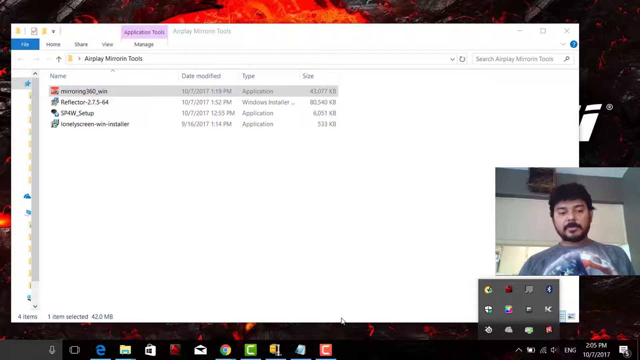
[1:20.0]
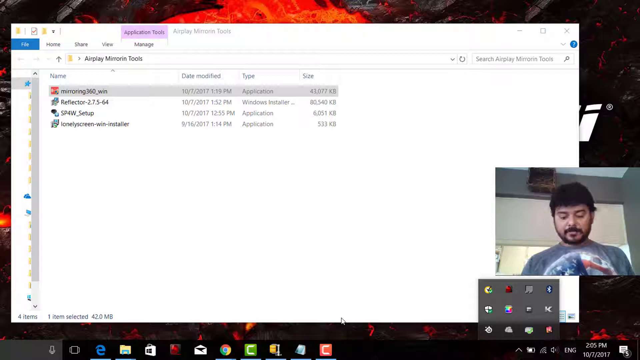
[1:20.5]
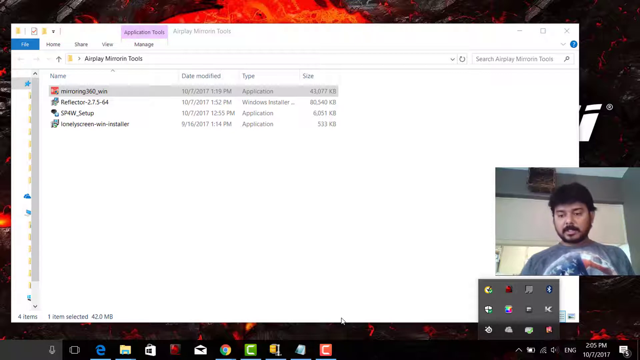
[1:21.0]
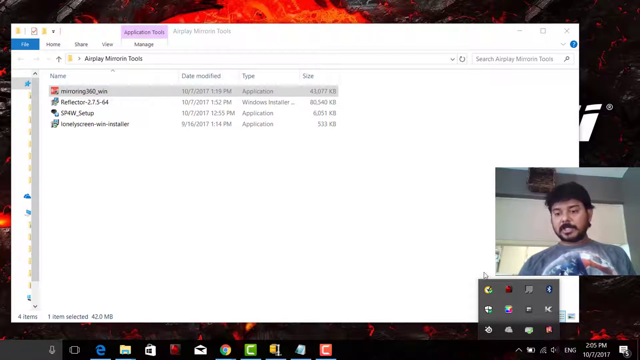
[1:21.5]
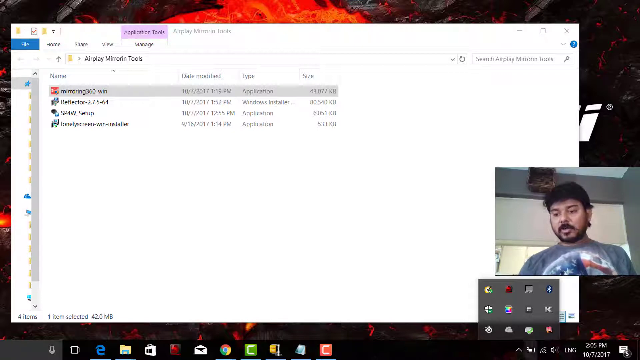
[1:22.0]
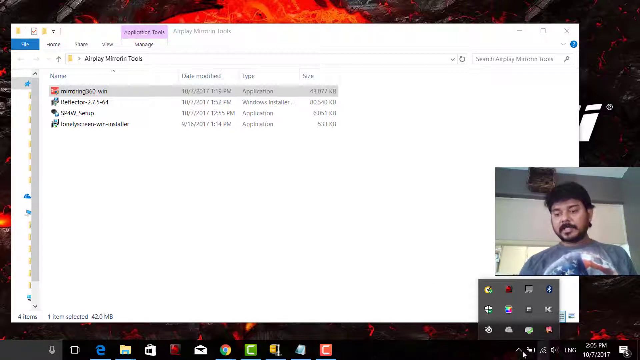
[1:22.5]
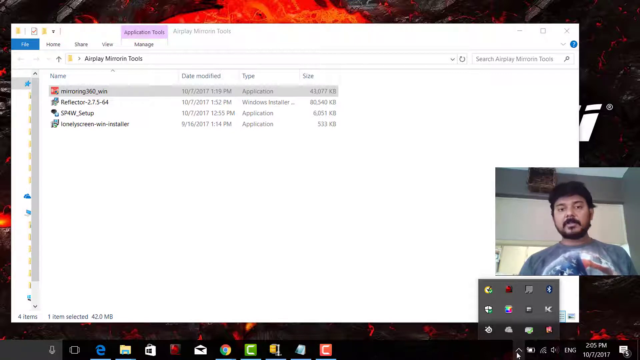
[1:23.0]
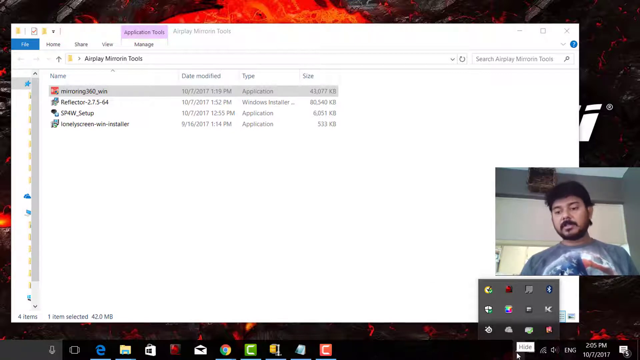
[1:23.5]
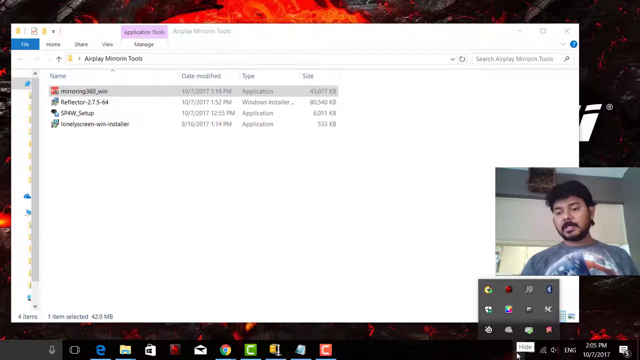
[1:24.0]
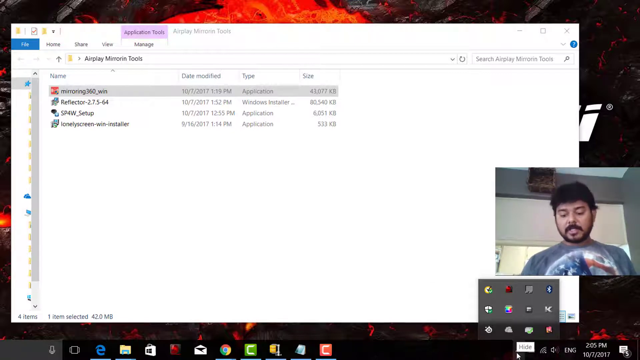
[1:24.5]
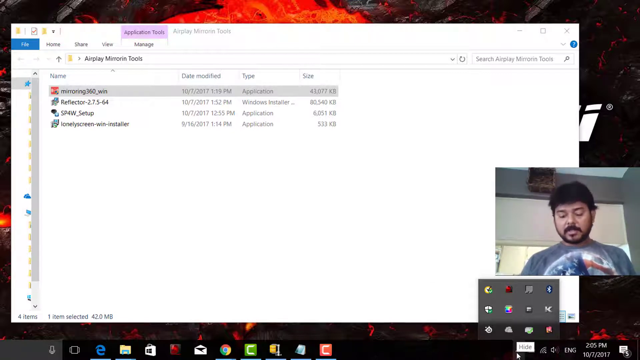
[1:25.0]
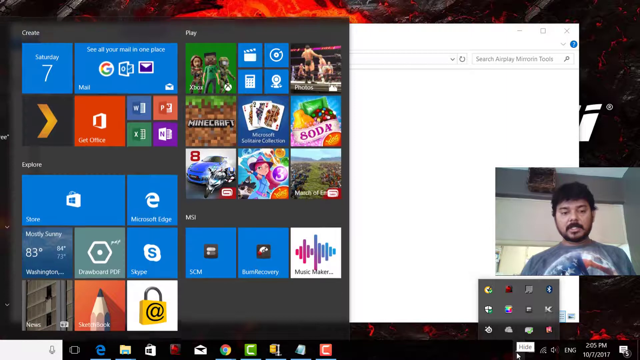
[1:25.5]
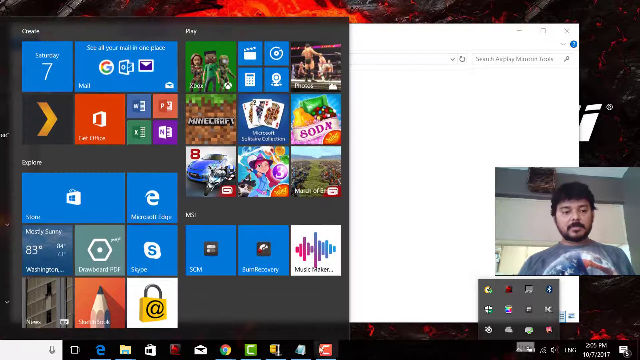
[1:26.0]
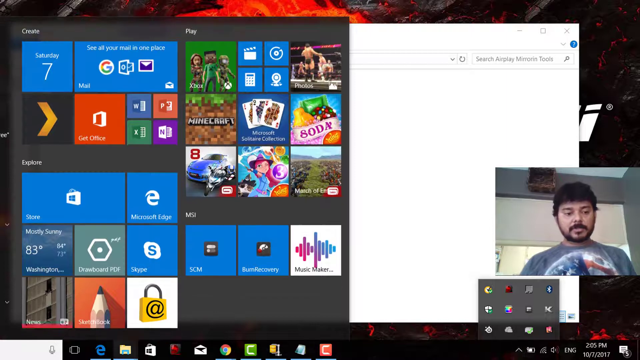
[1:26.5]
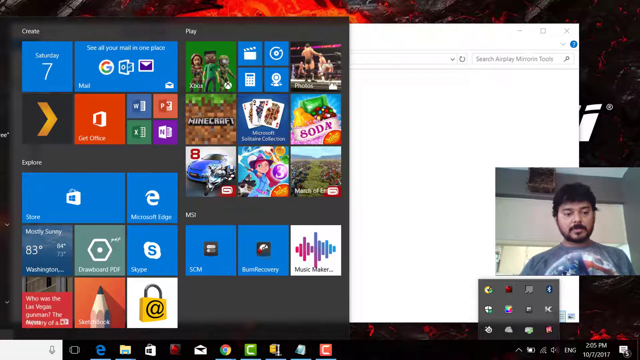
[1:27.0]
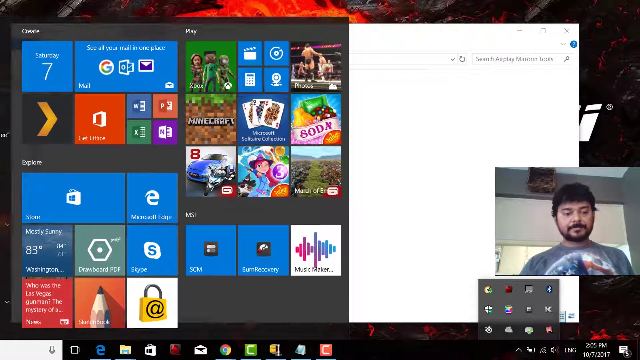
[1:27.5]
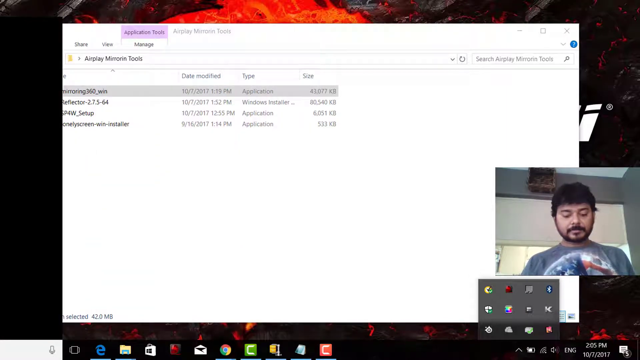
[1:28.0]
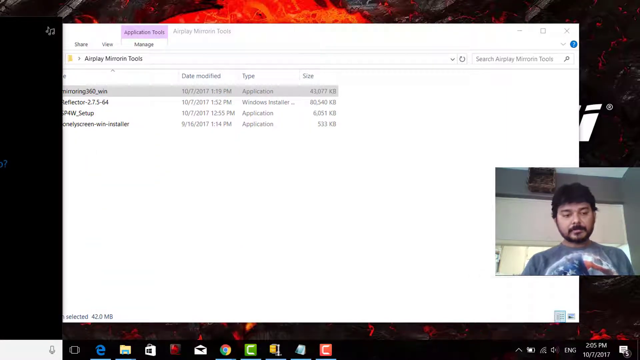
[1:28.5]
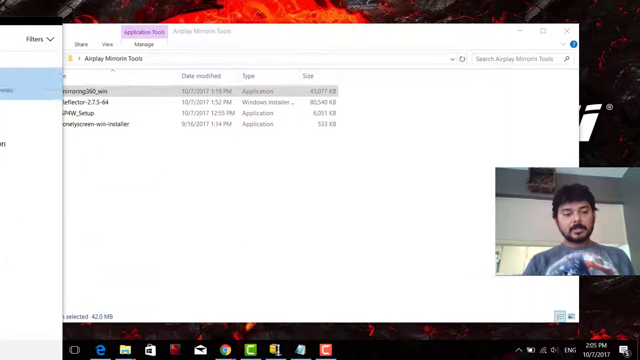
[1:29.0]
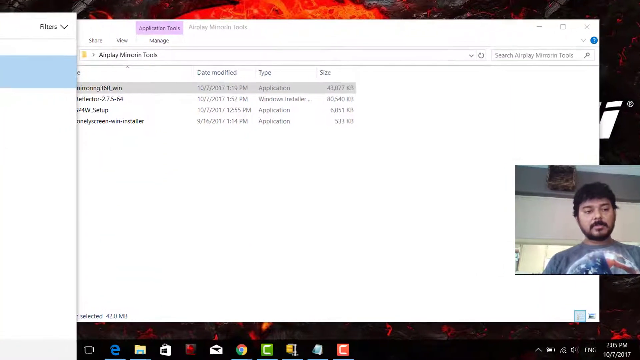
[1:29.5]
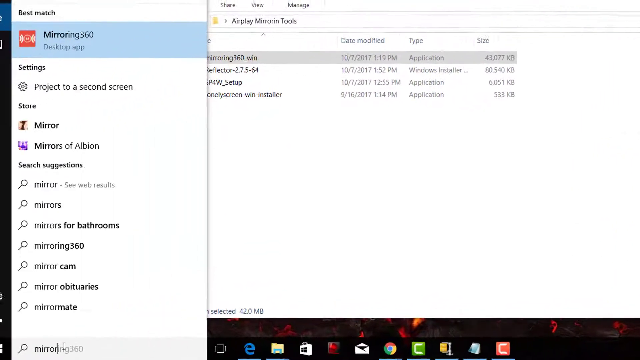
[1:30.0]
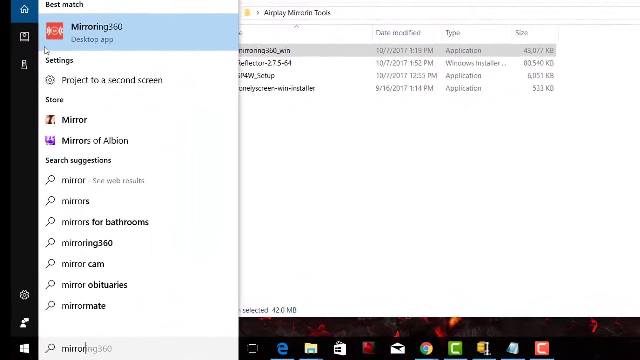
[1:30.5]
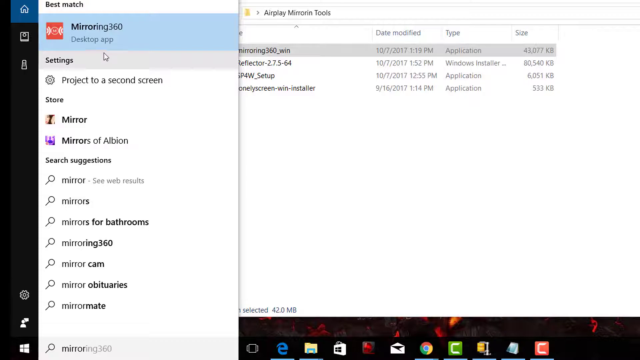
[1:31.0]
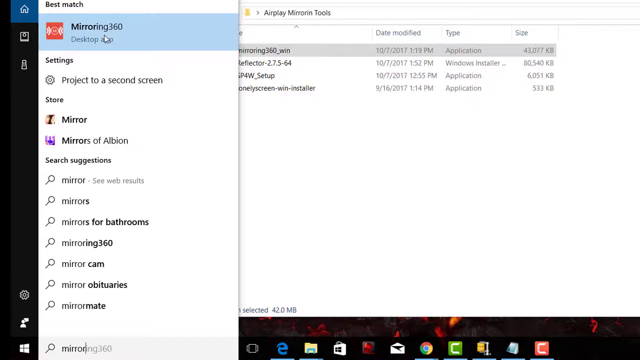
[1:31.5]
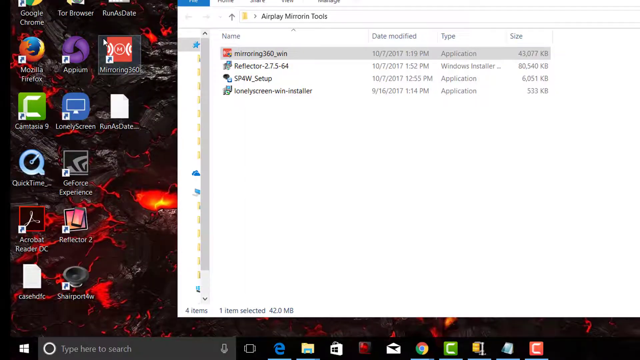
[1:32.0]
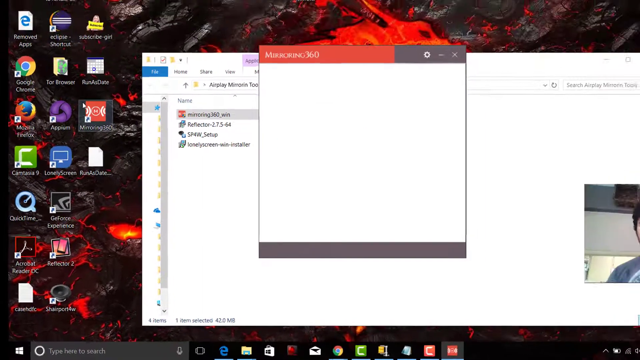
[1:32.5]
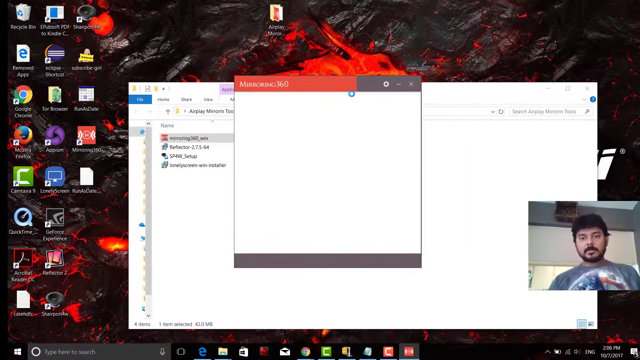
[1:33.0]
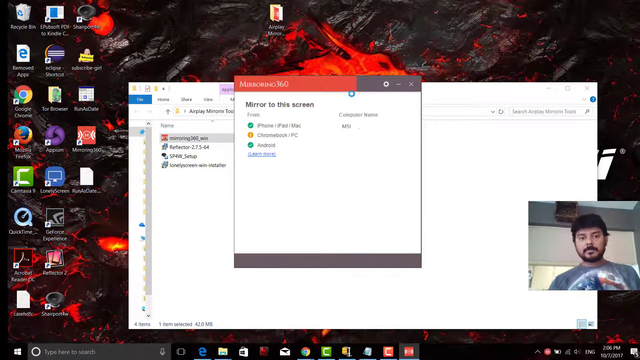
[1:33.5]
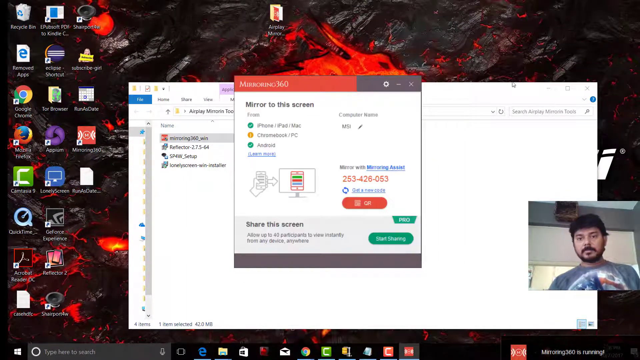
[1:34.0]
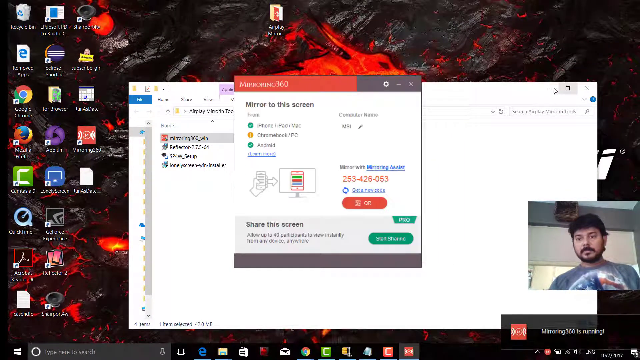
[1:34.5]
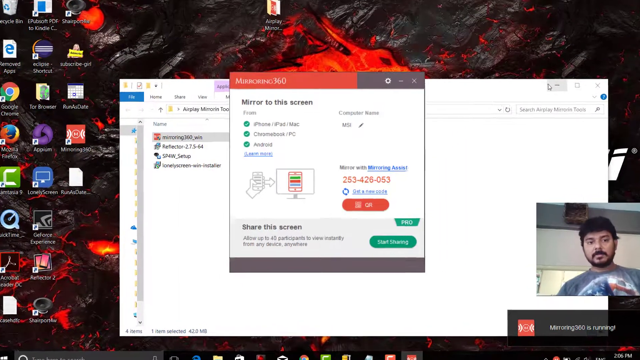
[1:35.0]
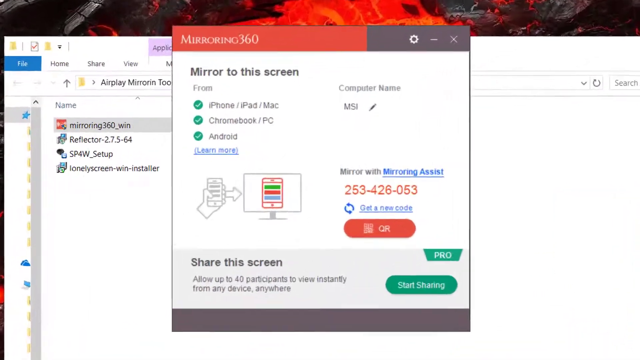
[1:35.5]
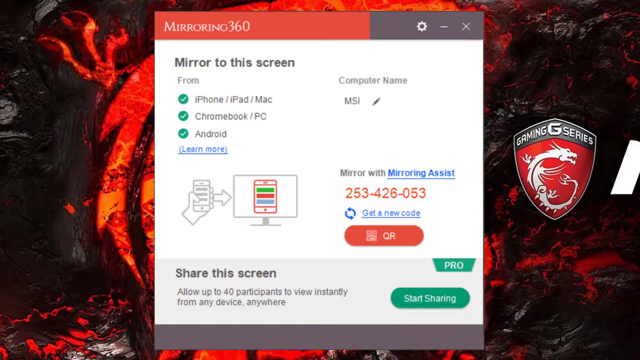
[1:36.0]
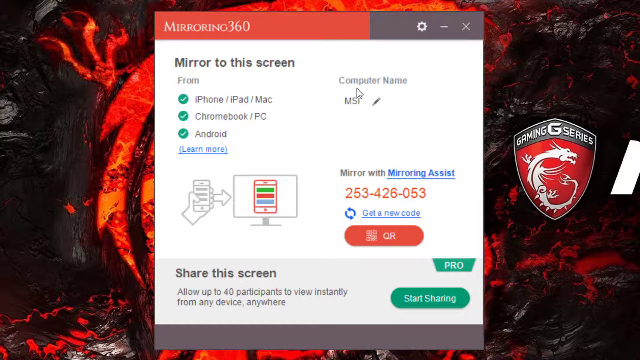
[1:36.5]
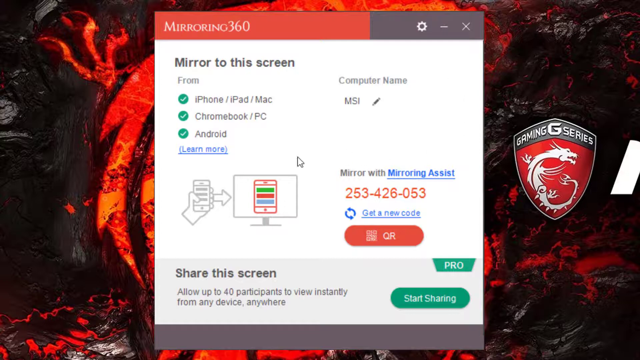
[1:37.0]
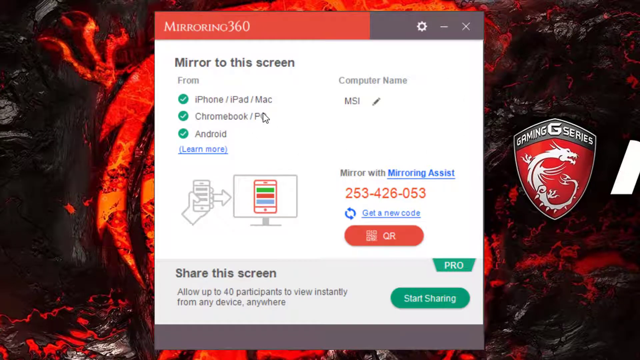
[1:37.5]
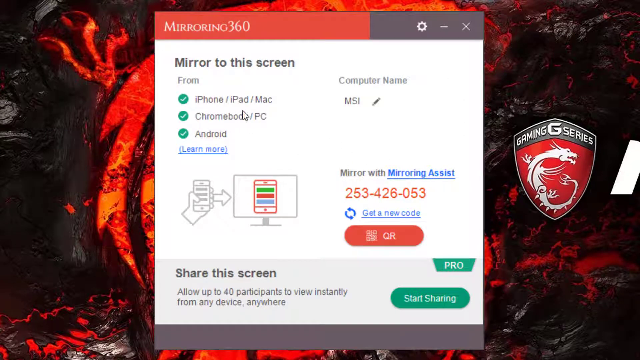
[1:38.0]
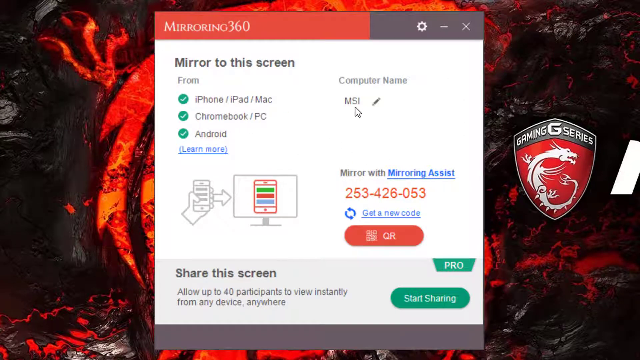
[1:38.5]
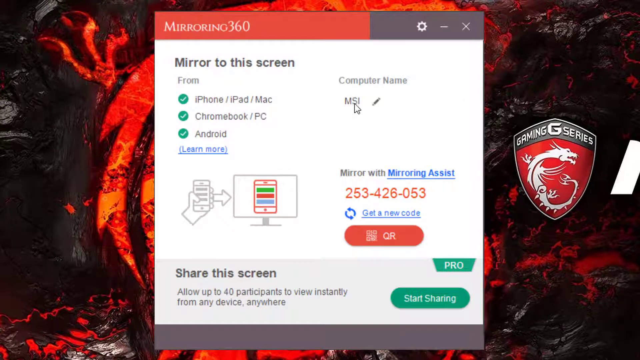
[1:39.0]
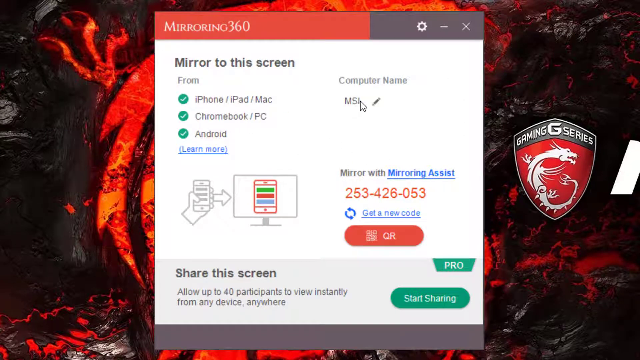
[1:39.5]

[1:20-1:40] A man shows the mirroring process on his computer screen. In the upper left corner a large box is open, and he has clicked on "mirroring 360_win," an application; the dates on these items are from October 7th of 2017. A little box with tools pops up in the bottom portion, then a side panel pops up containing the mirroring 360 app, which he opens, and it shows options for the Chromebook or the iPad. Boxes open and pop up as he works, and his picture stays in the lower right corner of the screen, so it is kind of like vlogging while showing what to click on.